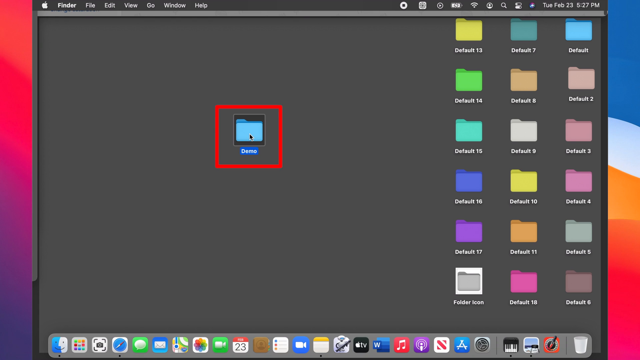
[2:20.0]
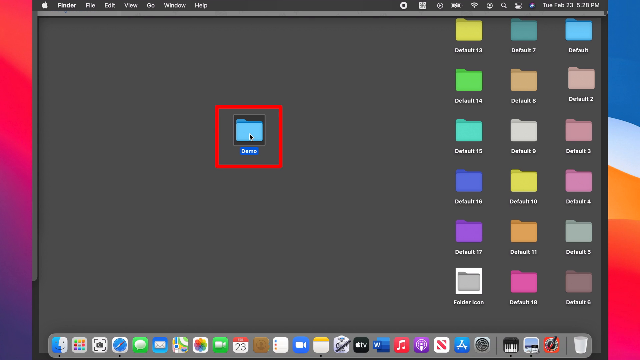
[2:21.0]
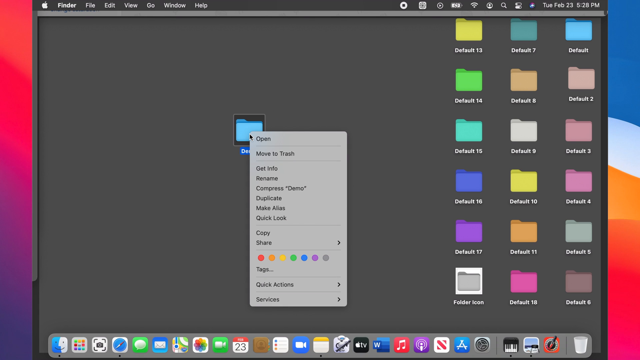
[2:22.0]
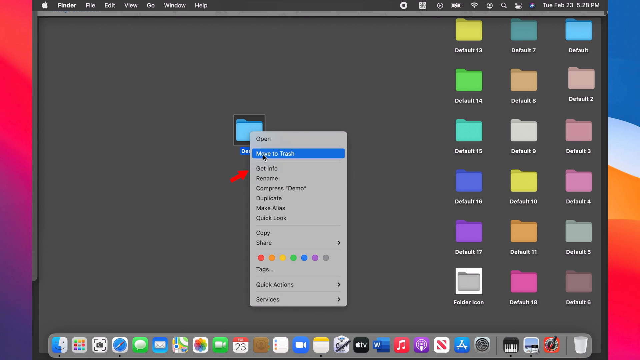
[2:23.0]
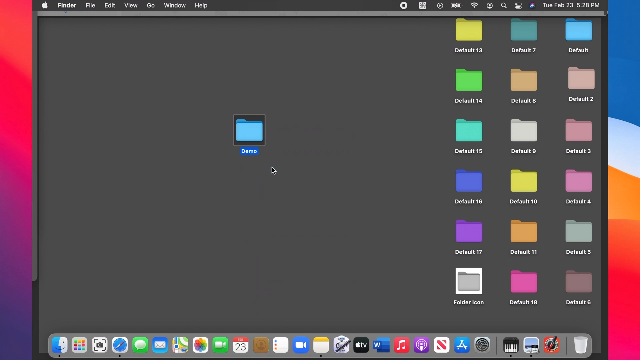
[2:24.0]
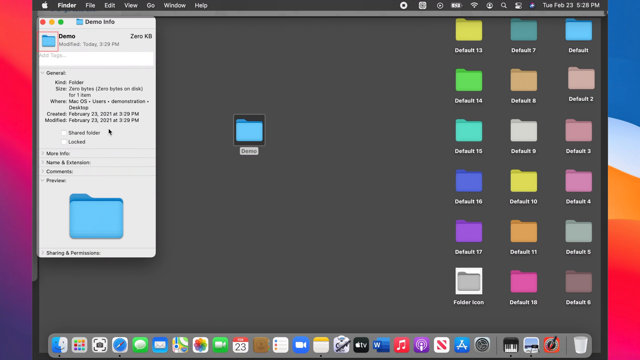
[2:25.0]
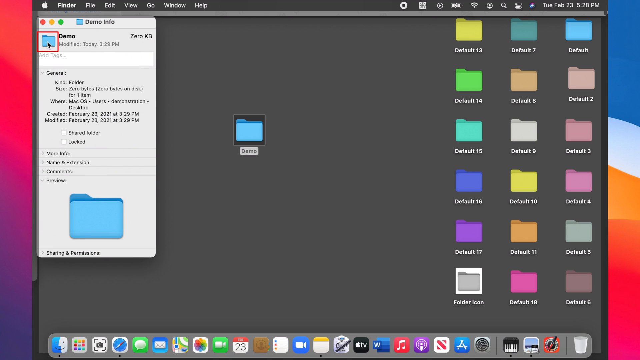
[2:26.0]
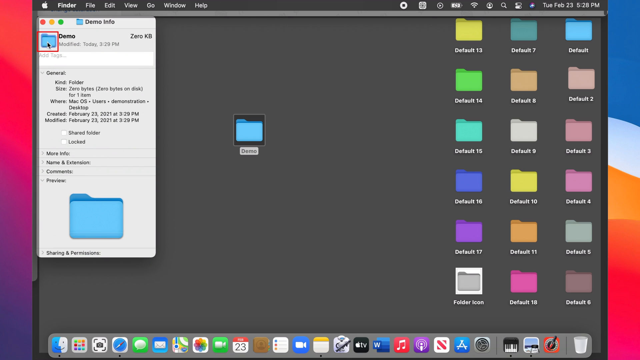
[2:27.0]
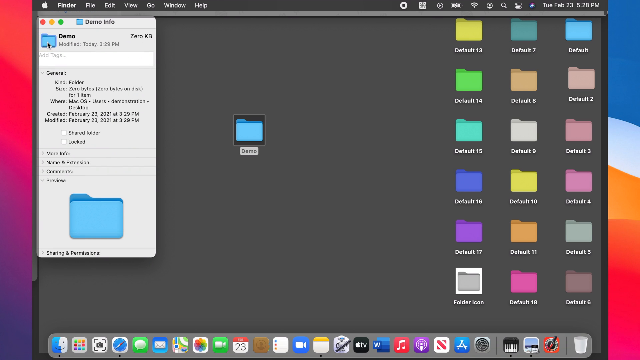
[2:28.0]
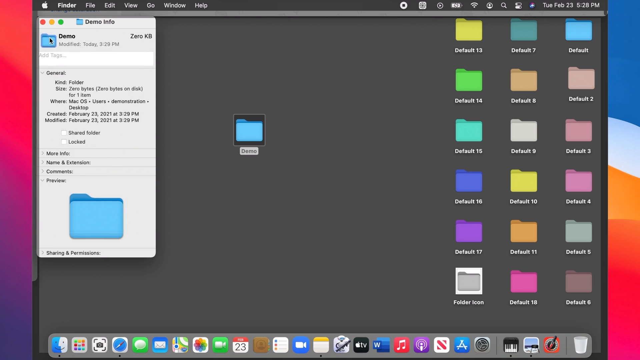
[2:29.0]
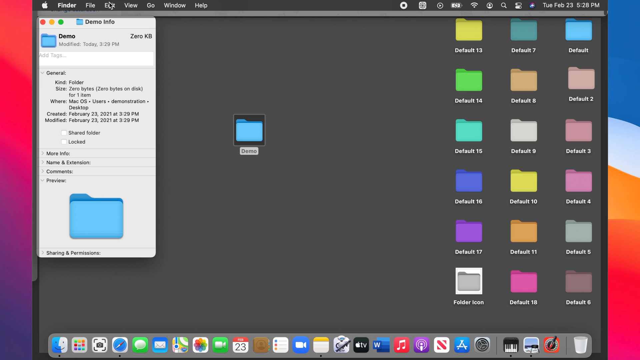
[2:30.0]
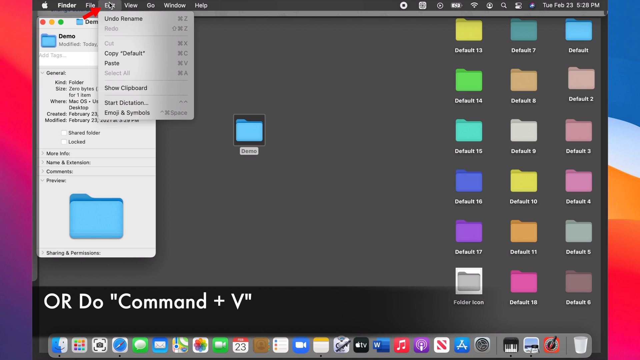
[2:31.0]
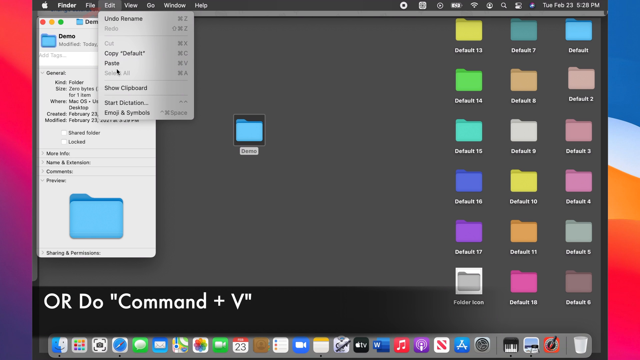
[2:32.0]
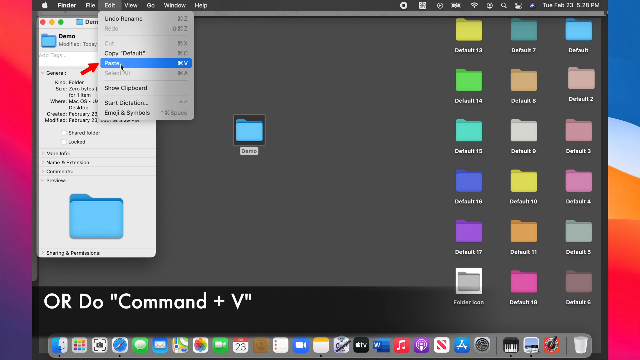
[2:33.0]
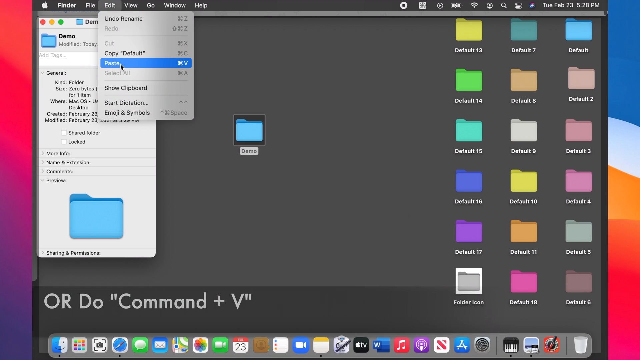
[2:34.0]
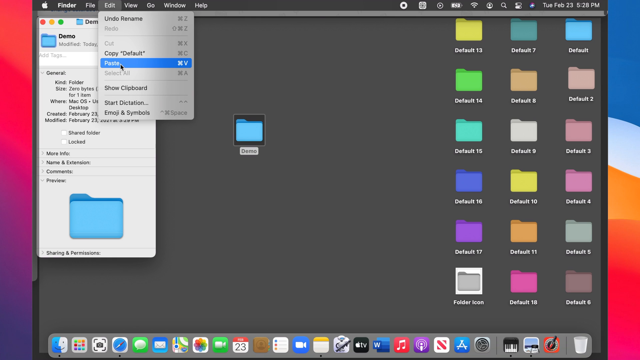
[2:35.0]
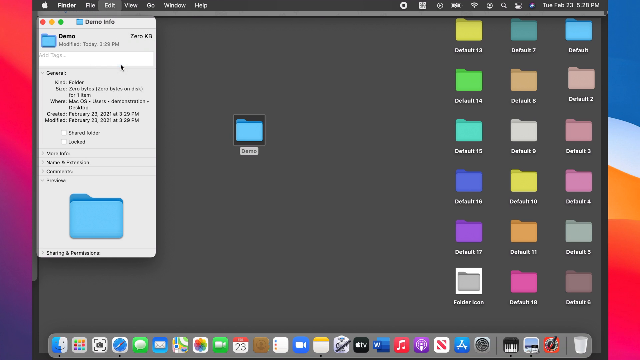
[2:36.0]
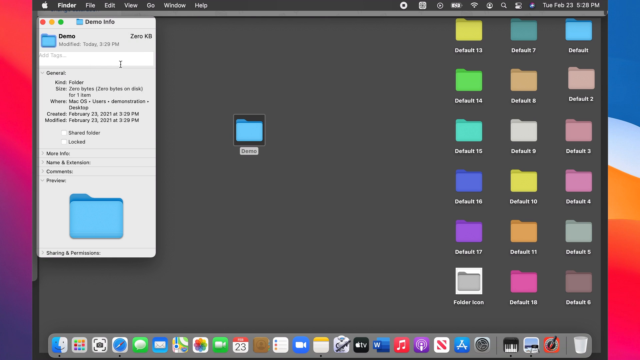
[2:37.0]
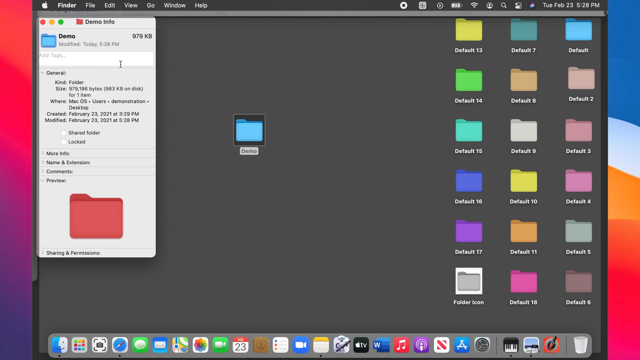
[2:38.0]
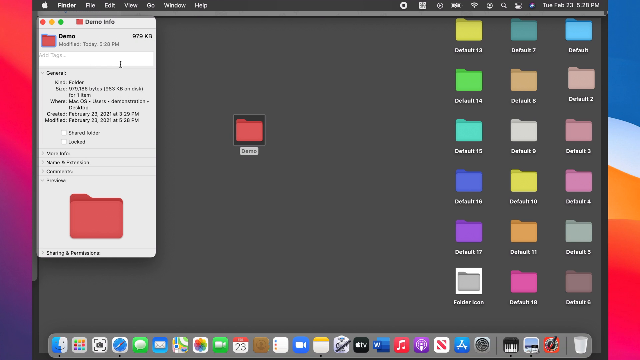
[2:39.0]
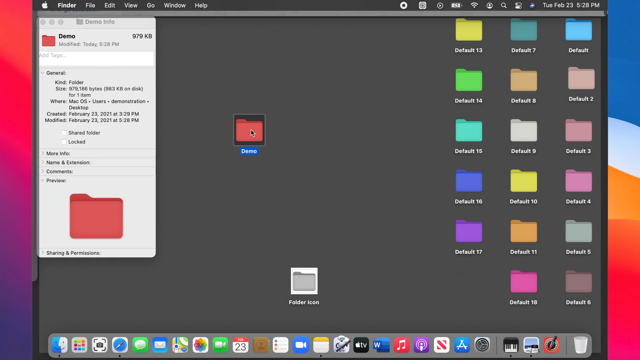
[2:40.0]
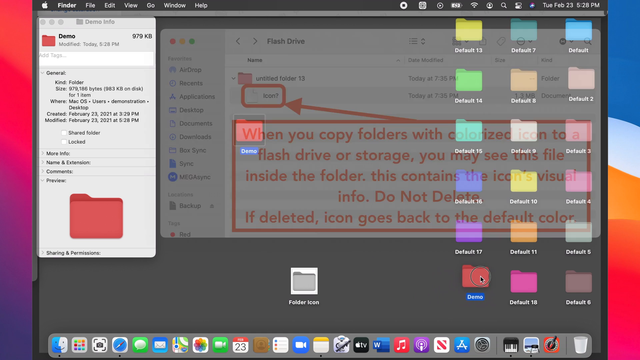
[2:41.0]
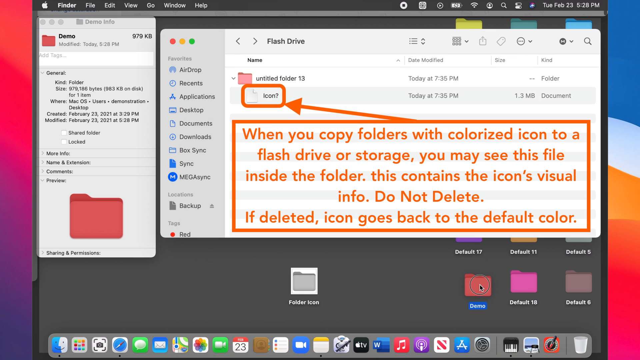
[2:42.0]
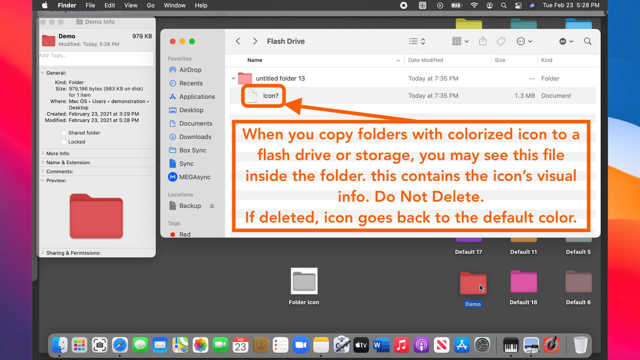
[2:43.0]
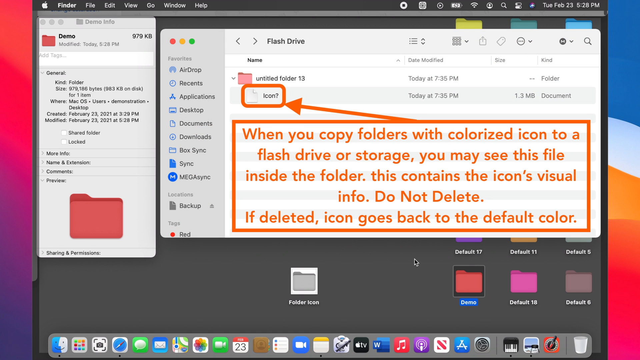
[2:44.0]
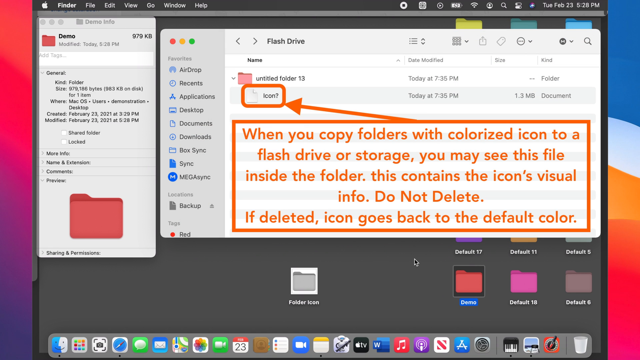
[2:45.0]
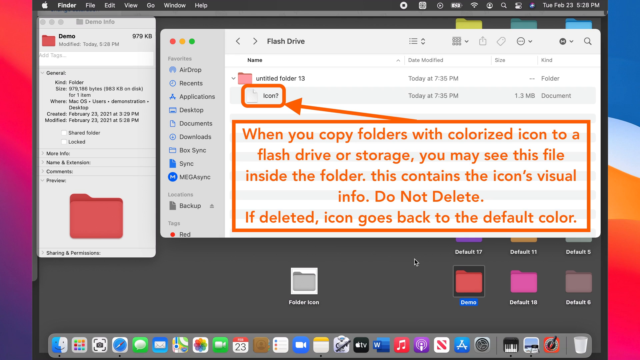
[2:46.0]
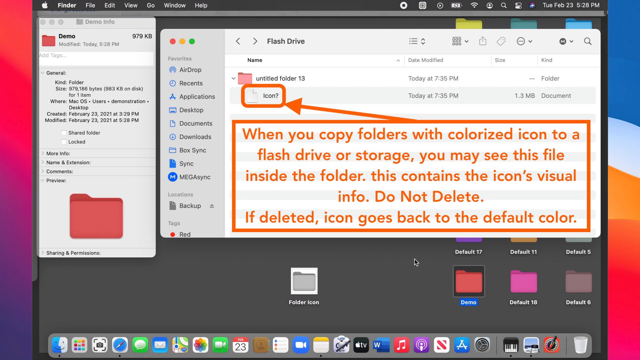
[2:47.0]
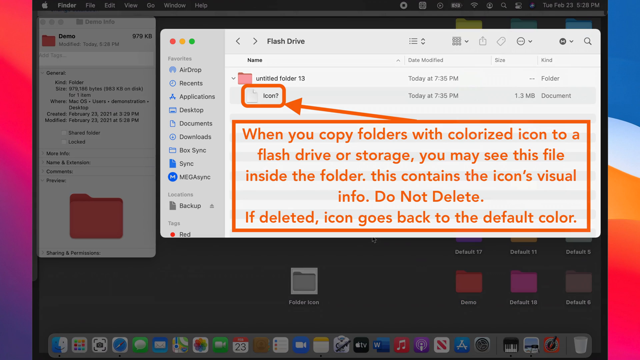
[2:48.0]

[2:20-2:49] The desktop has a whole bunch of brightly colored files on the right-hand side. The folder just made red is back to blue. The user goes to Edit and clicks Paste, making the folder red again, then scrolls the red folder down to the right. A window pops up that says "icon", with a half-white, half-gray backdrop on the top portion and a white backdrop on the bottom portion, where an orange rectangle surrounds the words: "When you copy folders with colorized icon to a flash drive or storage, you may see this file inside a folder. This contains icon's visual info, do not delete. If deleted, icon goes back to the default color." The screen then flashes back to the original view with the blue folder, surrounded by a red square.